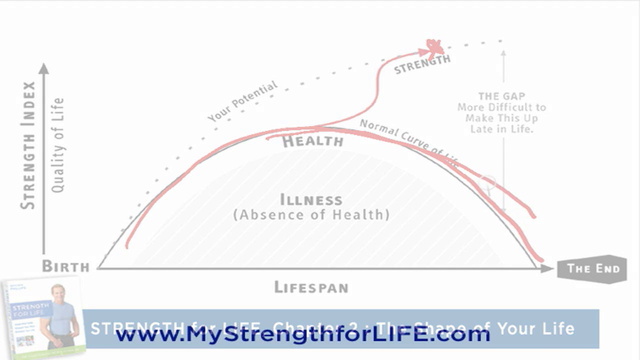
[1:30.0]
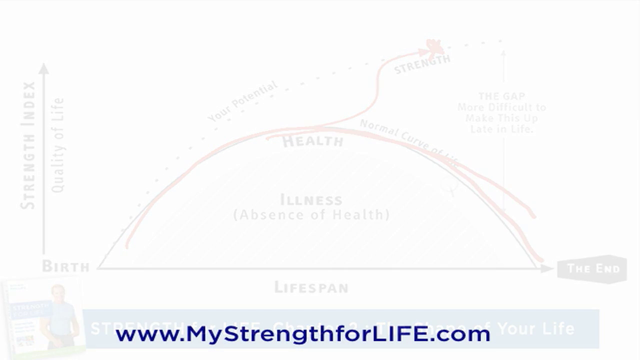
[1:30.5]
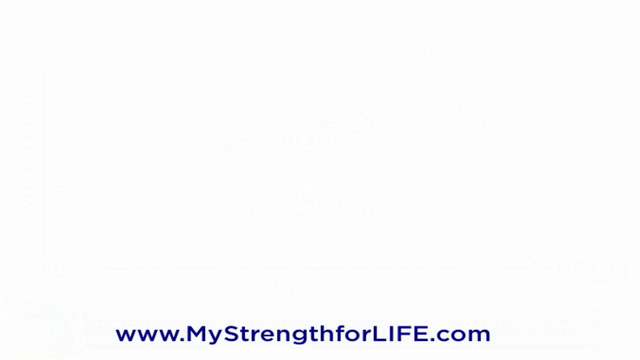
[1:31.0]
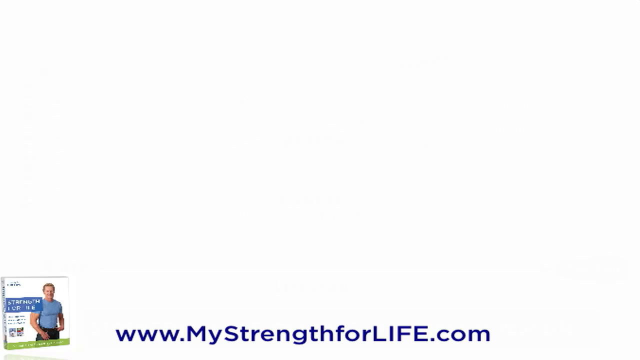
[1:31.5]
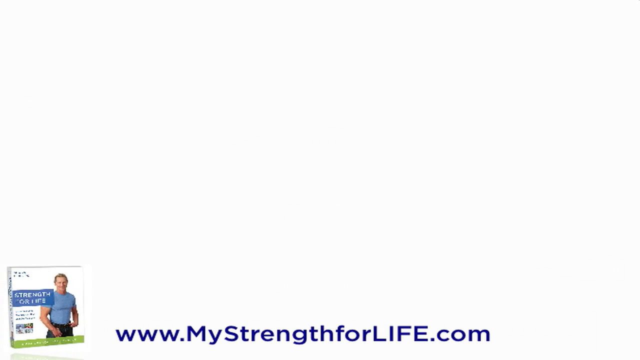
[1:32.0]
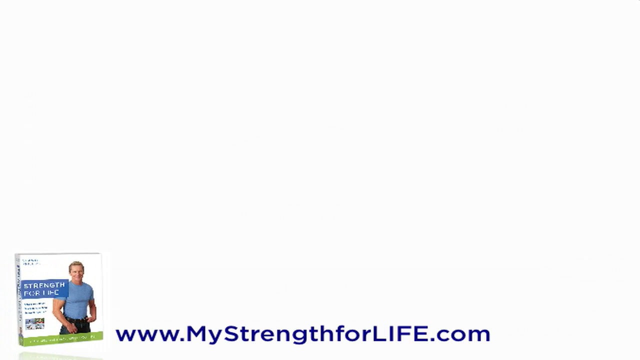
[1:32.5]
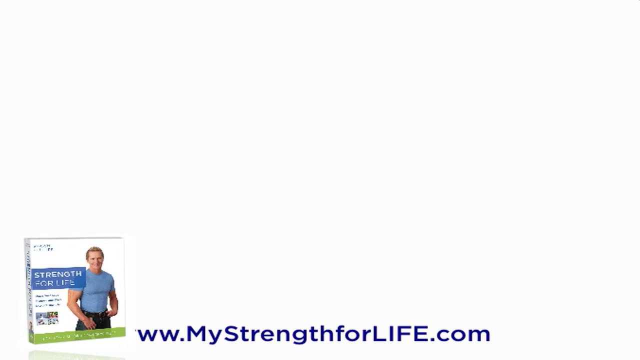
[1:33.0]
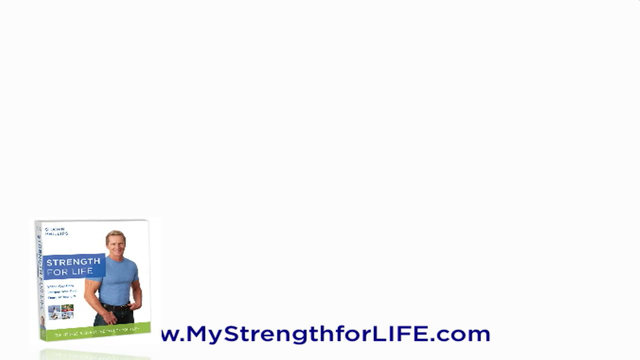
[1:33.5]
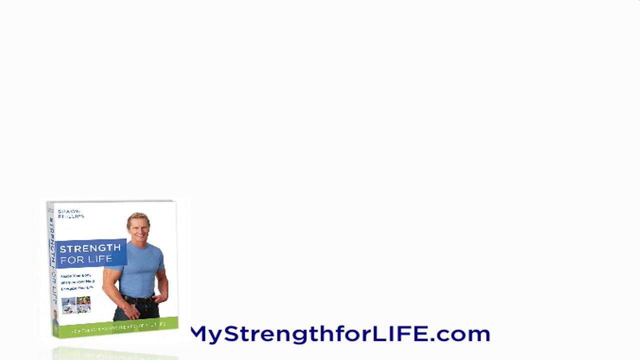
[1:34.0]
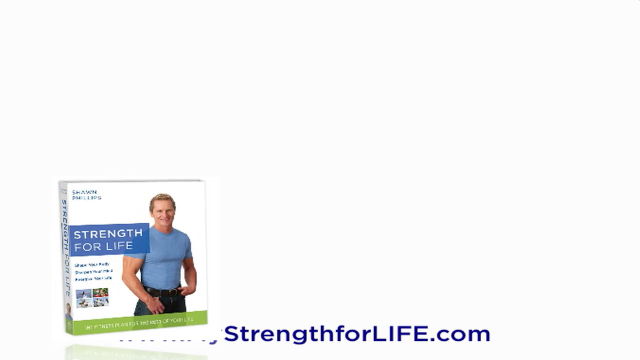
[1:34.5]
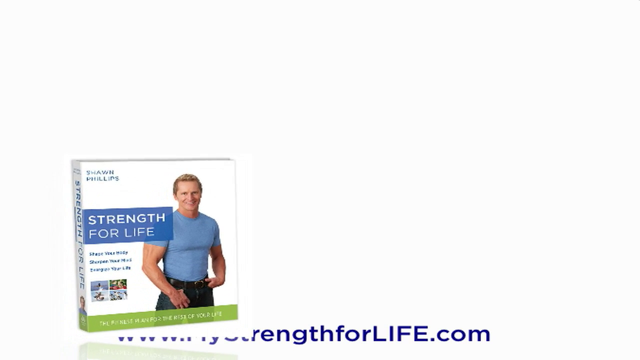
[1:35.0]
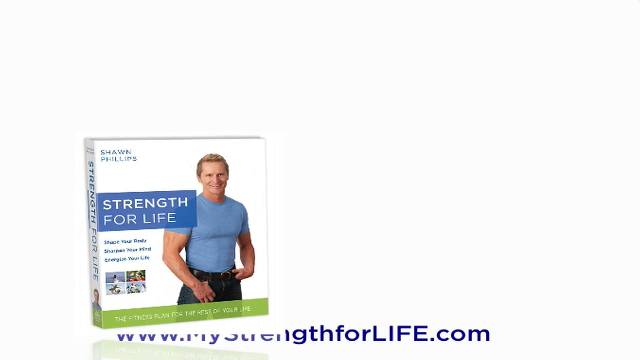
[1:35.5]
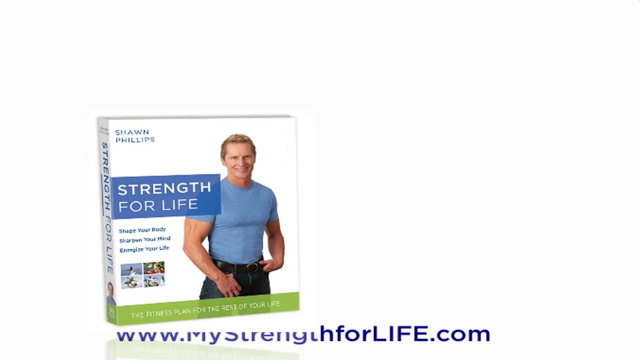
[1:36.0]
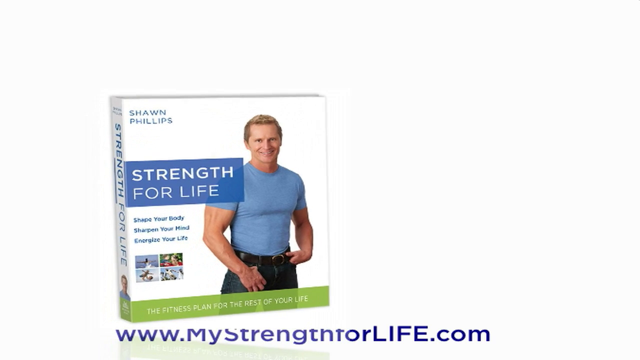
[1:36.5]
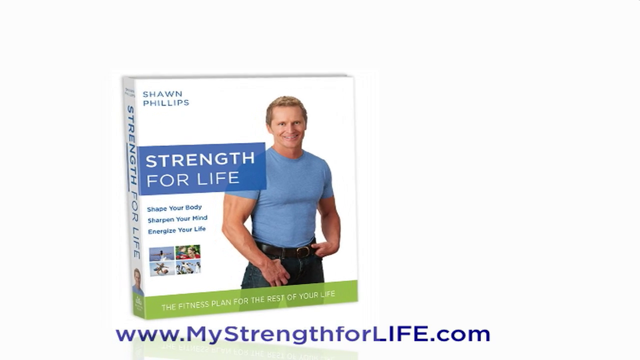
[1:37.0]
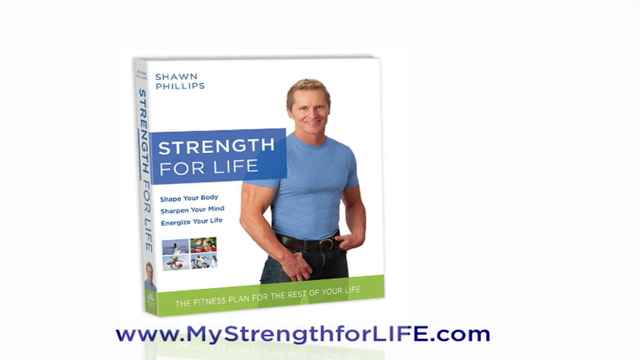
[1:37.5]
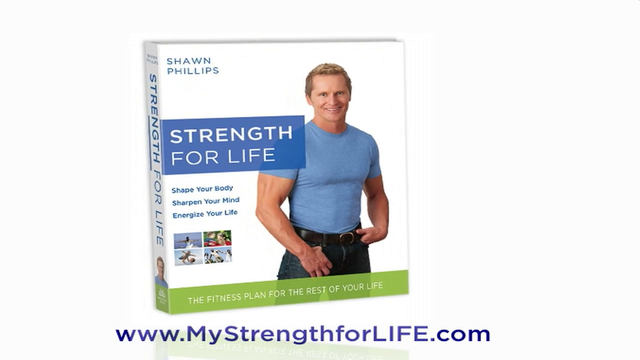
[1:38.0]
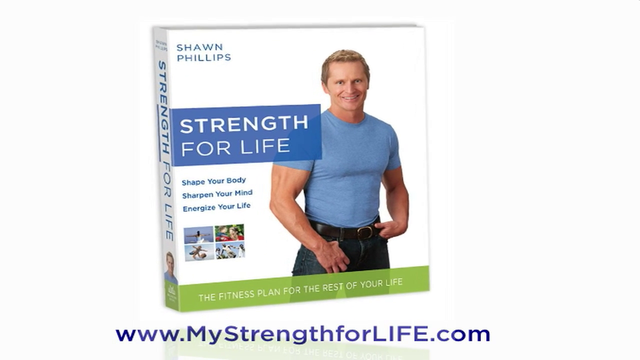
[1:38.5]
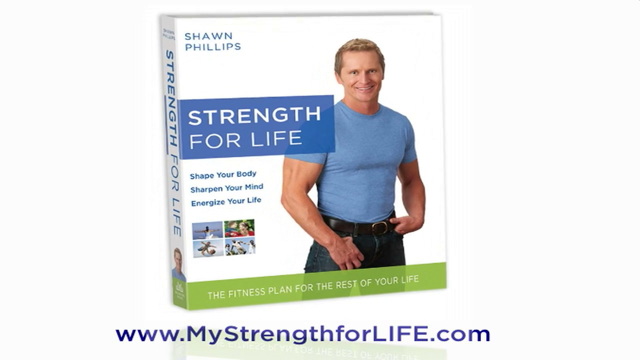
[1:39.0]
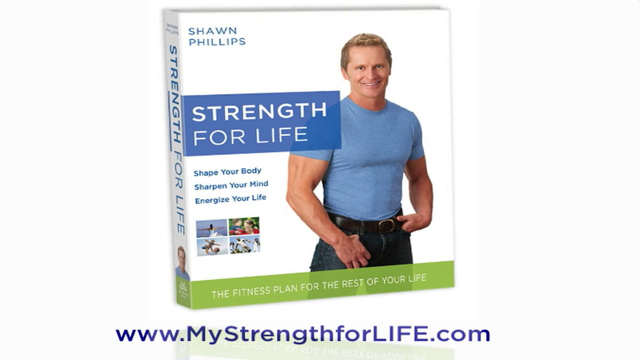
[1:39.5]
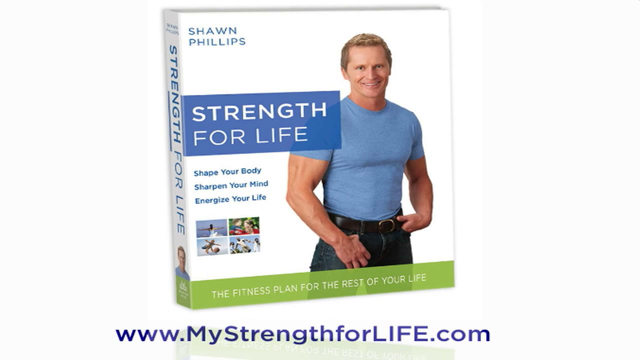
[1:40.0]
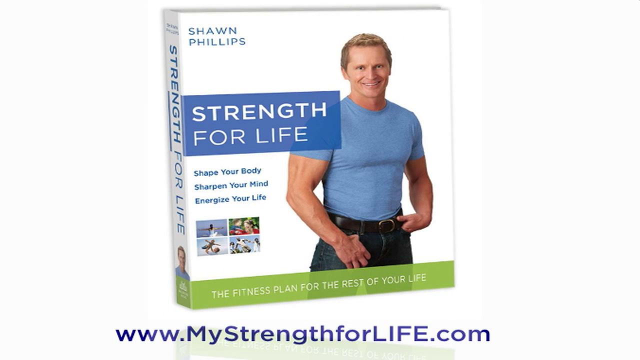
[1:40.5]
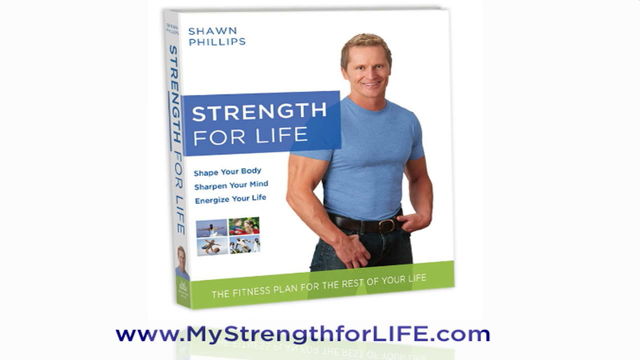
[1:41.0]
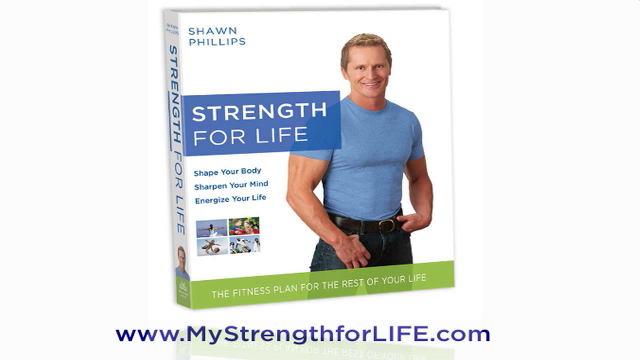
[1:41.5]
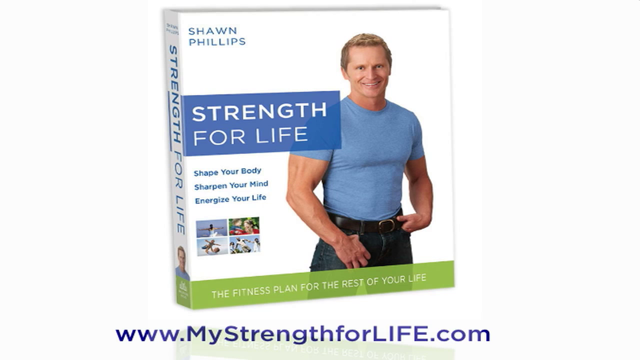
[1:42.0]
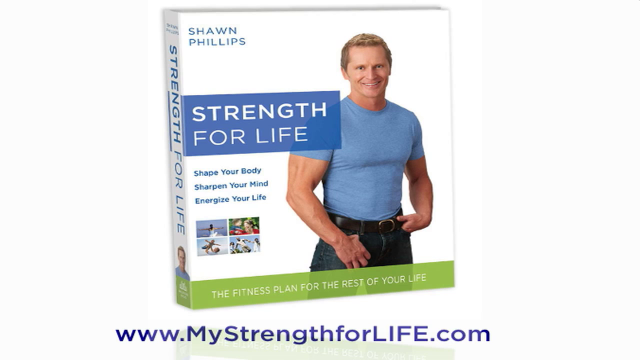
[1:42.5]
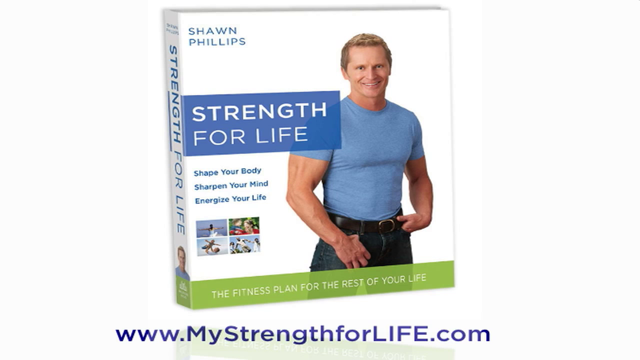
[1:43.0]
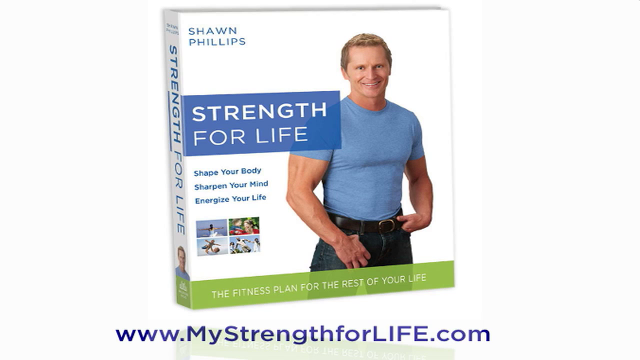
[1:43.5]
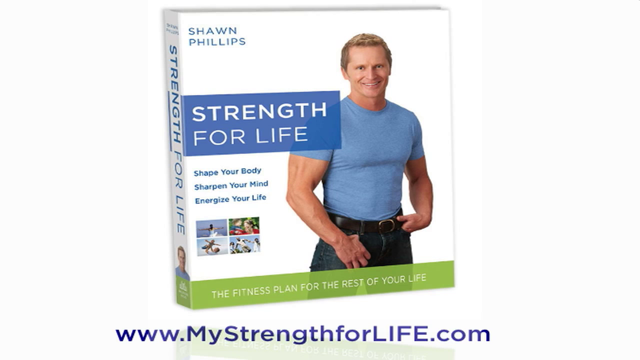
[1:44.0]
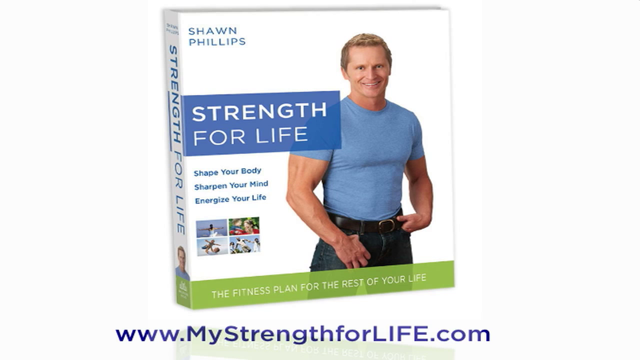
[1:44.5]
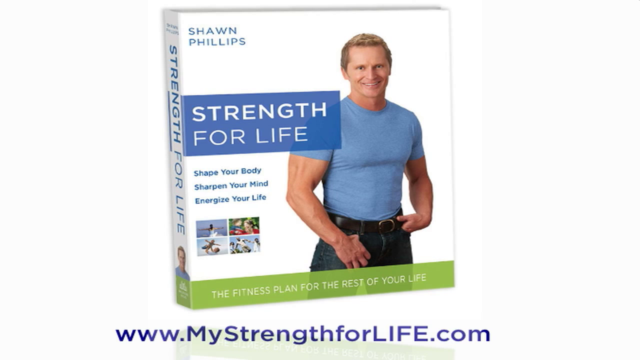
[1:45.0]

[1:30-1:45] A book is shown. Its cover reads "sound tips", "strength for life", "shape your body, shape your mind, energize your life" and "fitness plan for the rest of your life".